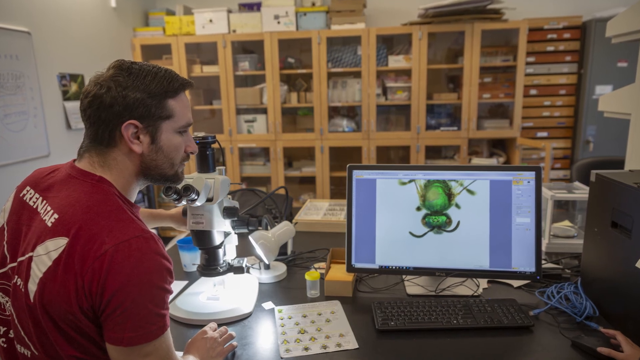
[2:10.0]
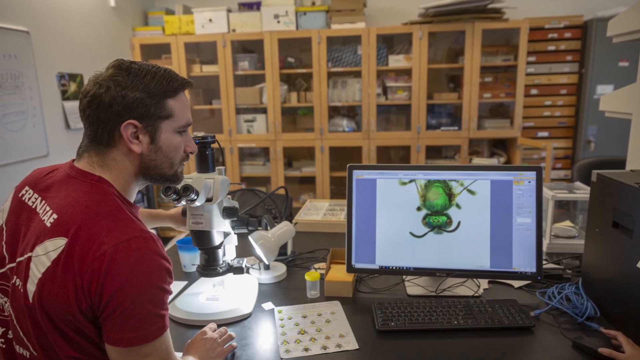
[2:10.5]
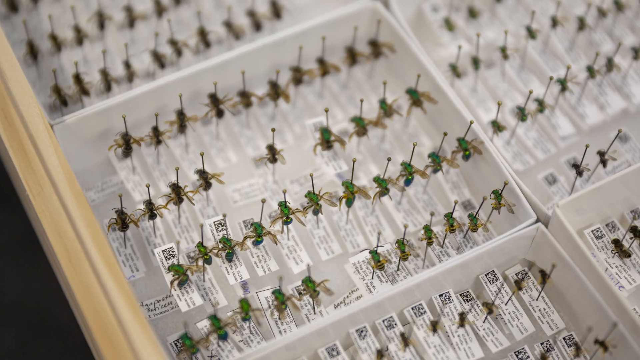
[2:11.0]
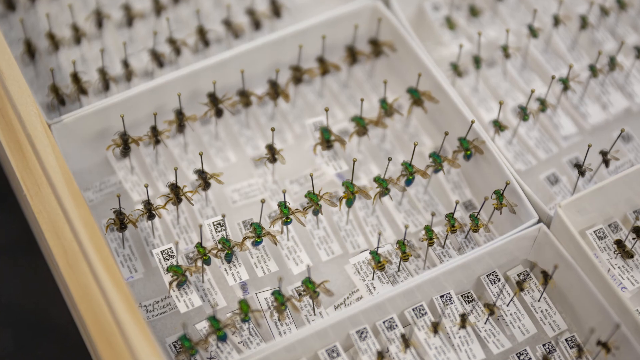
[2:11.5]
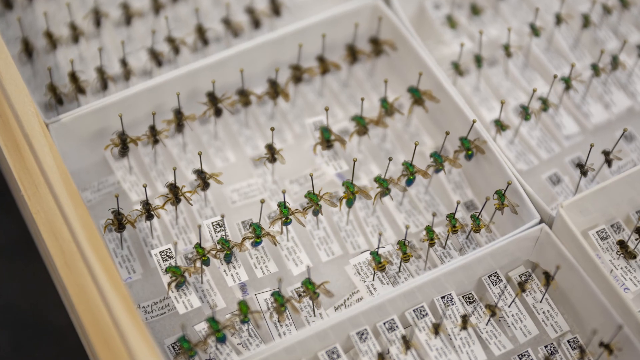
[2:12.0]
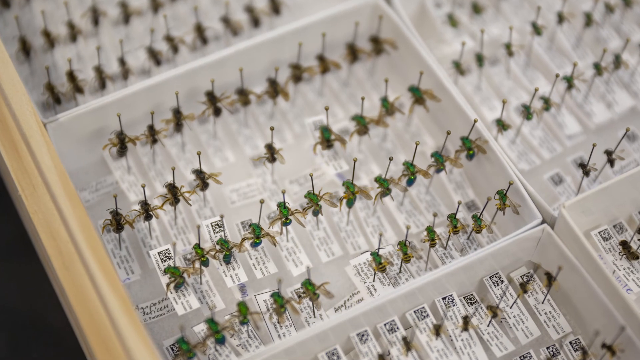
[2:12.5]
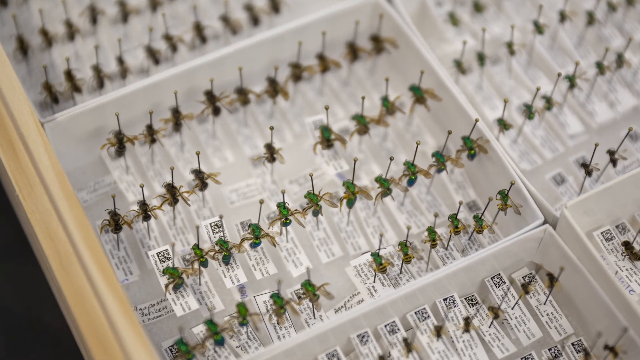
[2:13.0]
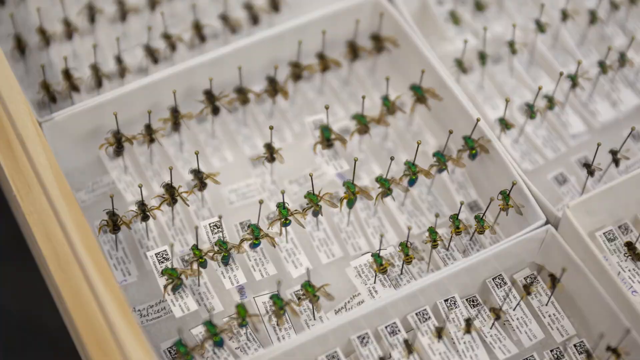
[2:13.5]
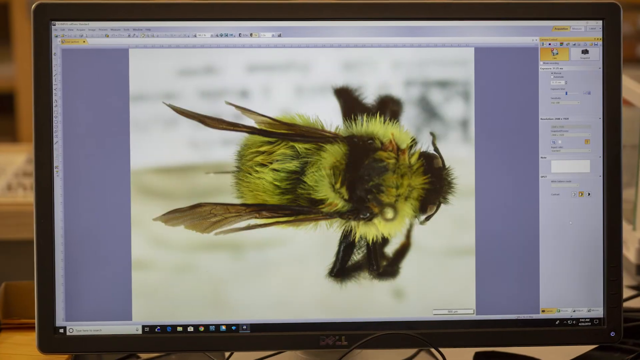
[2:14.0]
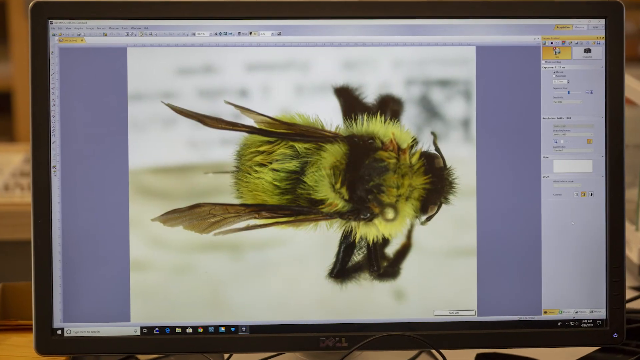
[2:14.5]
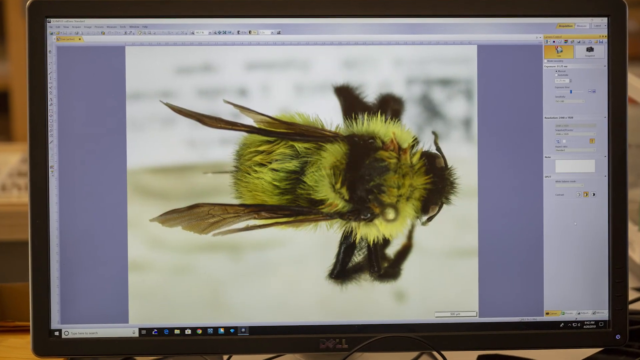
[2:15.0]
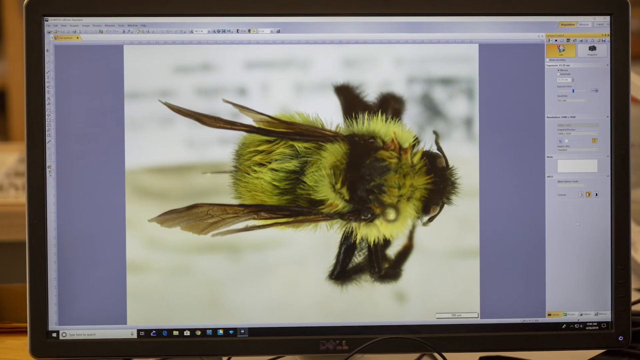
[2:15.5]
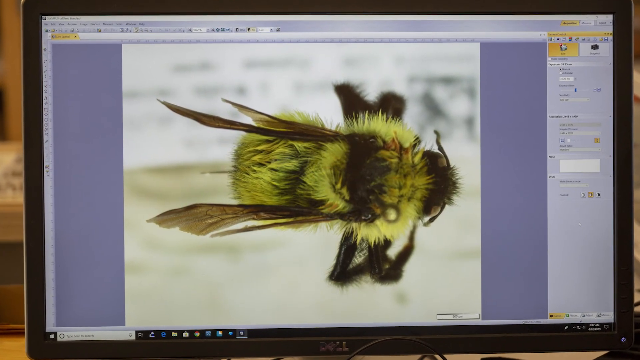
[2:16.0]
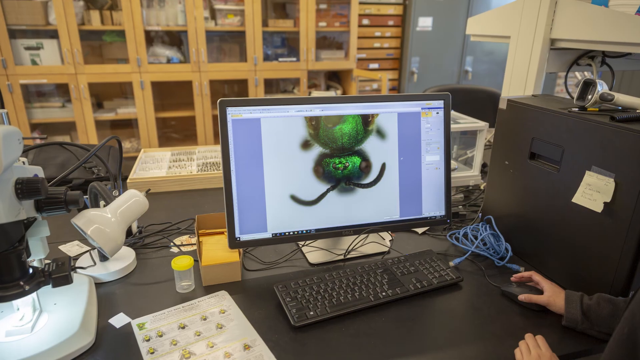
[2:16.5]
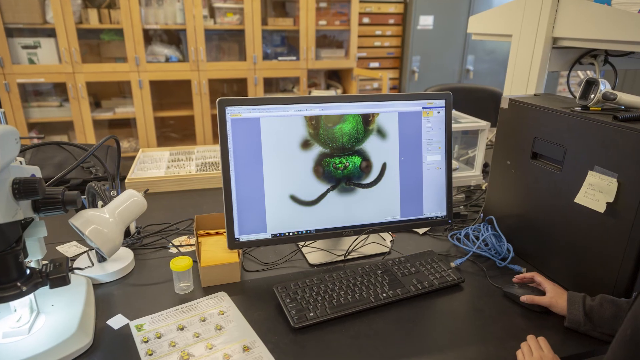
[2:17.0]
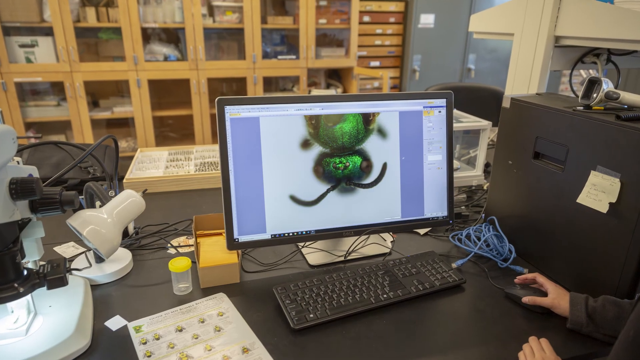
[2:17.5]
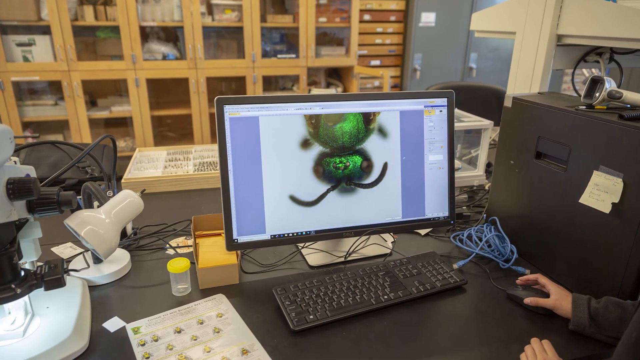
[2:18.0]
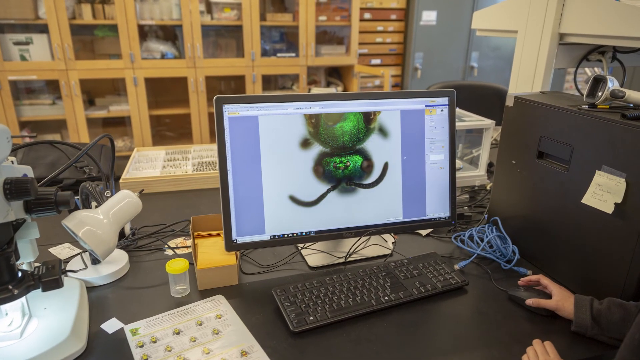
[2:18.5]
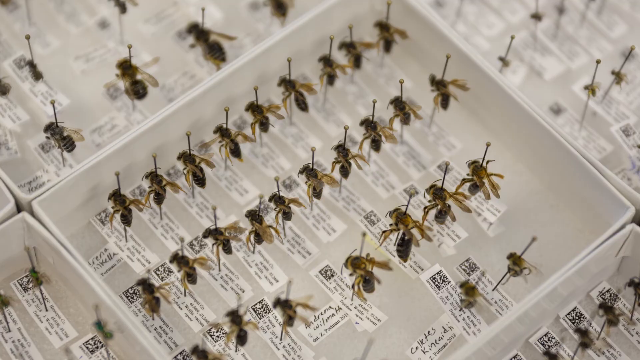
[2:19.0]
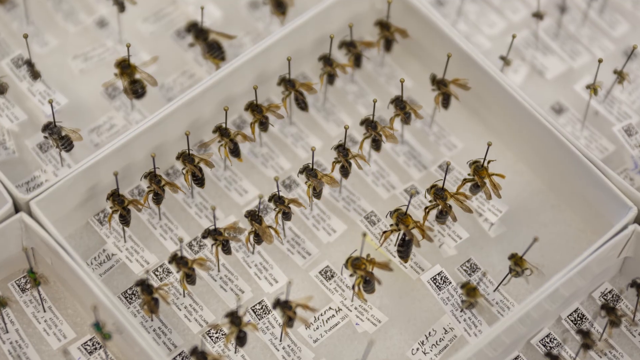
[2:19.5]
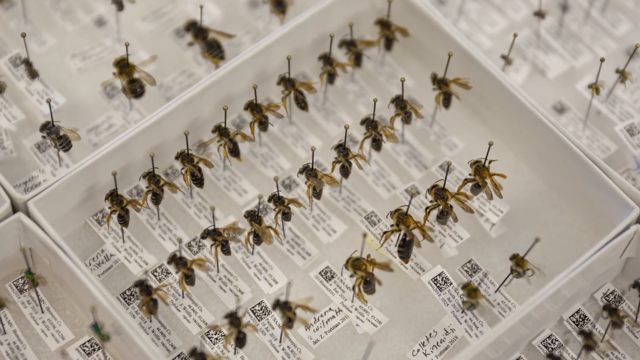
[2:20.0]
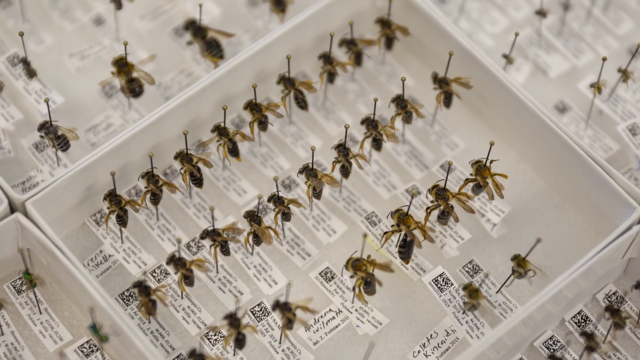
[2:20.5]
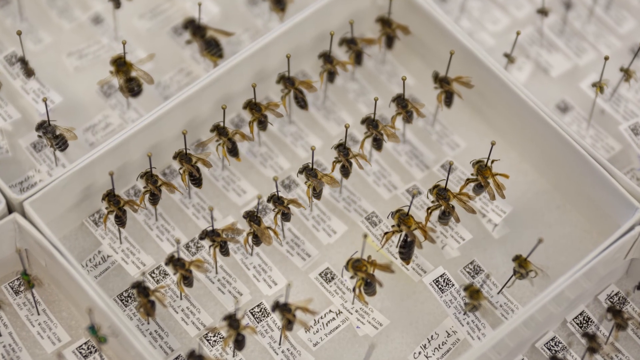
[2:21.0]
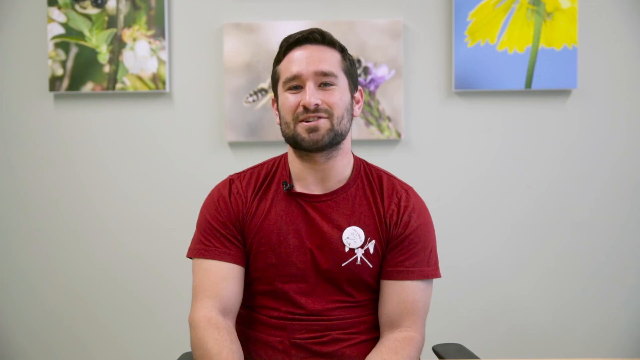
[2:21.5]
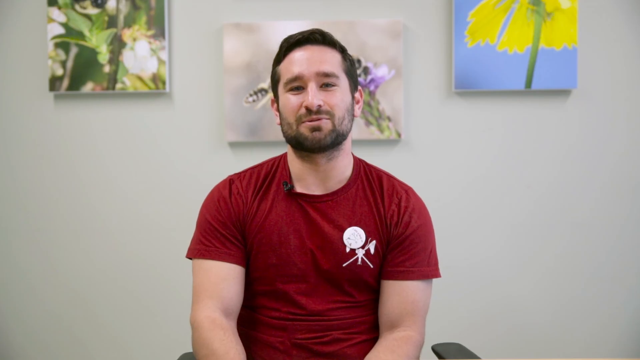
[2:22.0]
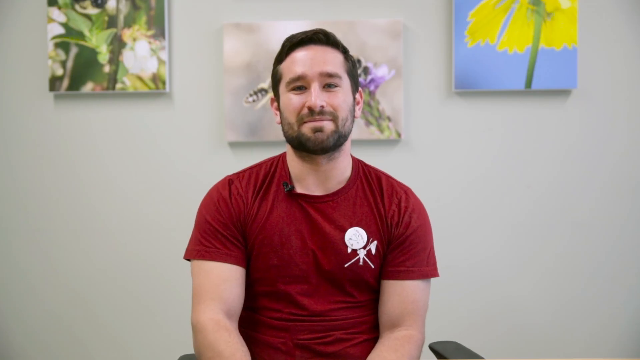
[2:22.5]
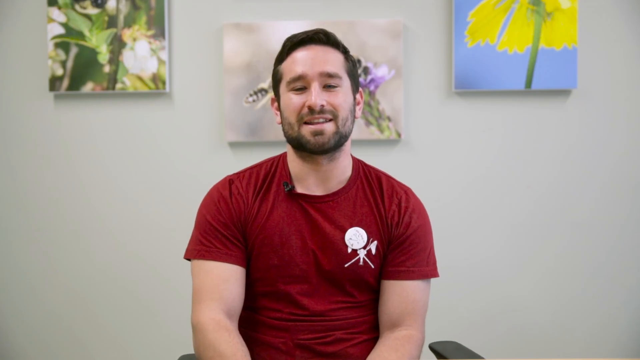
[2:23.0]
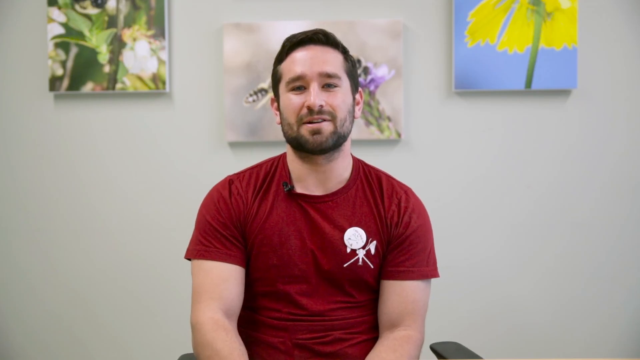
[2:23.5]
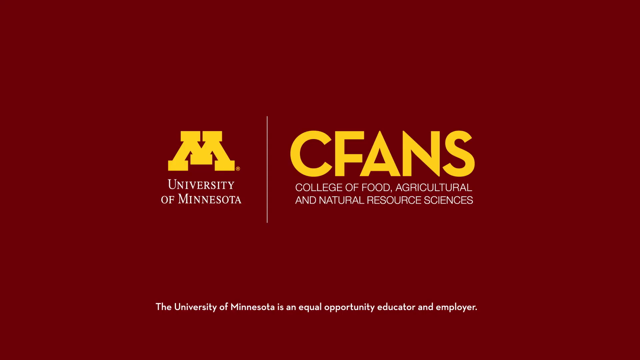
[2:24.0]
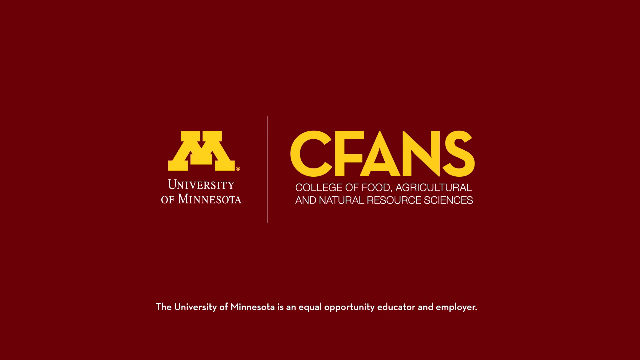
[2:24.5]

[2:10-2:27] A man wearing a red t-shirt has a microscope and a lamp in front of him and looks at an insect that looks like a fly on a computer screen. The room is very disorganized and cluttered, with storage shelves in the distance holding a lot of different equipment, a whiteboard, and a calendar on the wall. A bunch of flies have a little black object sticking through them, with white pieces of paper labeling each fly. A bumblebee is shown up close on a computer screen. Another screen shows the fly, with a person's hand on a mouse. Another photograph shows what looks to be bees or wasps with little black objects sticking through them and little white pieces of paper attached to label them. The man in the red t-shirt then looks at the camera and talks, with art pieces of different flowers on the wall behind him. Finally, a red background shows white and yellow text reading "University of Minnesota, CFANS, College of Food, Agricultural, and Natural Resource Sciences. The University of Minnesota is an equal opportunity educator and employer."